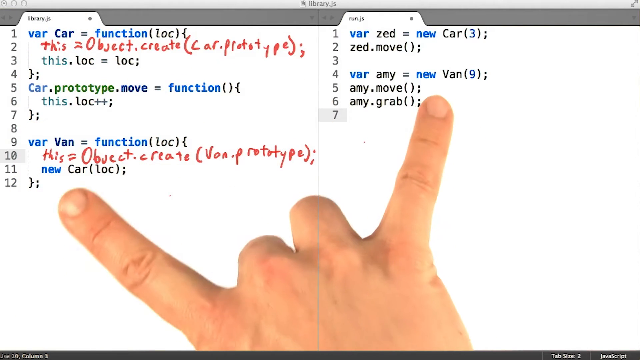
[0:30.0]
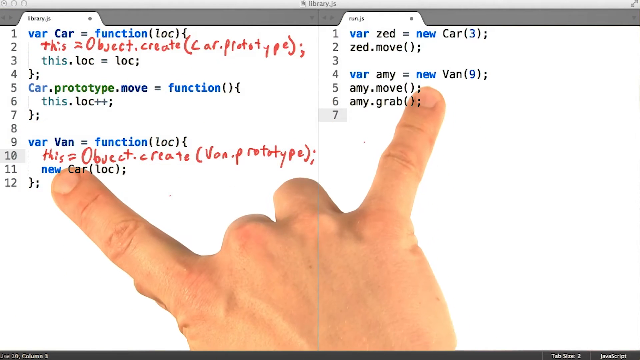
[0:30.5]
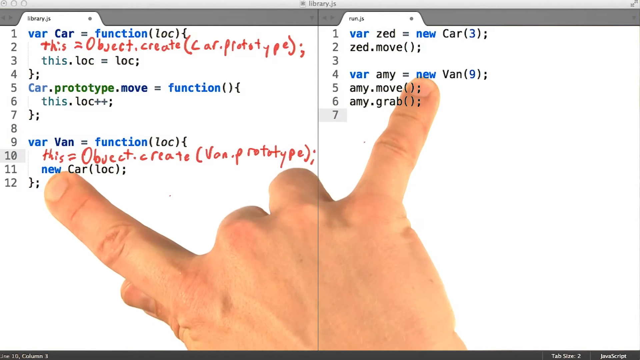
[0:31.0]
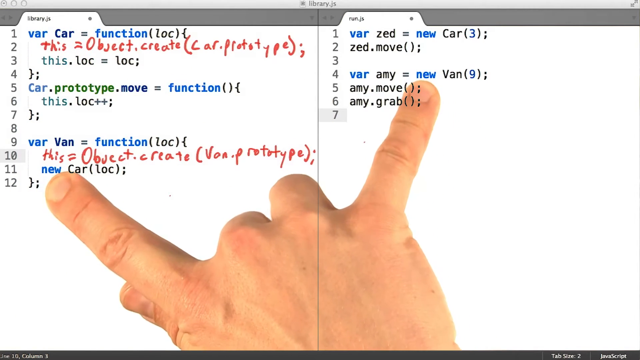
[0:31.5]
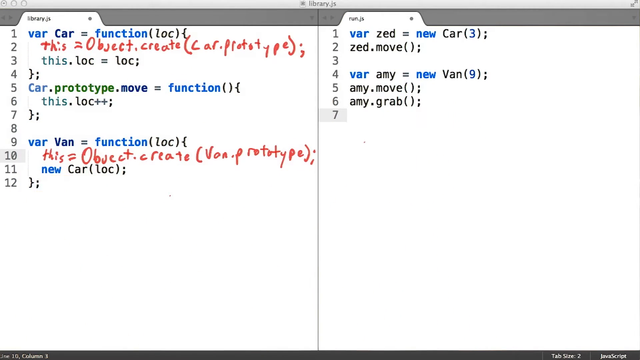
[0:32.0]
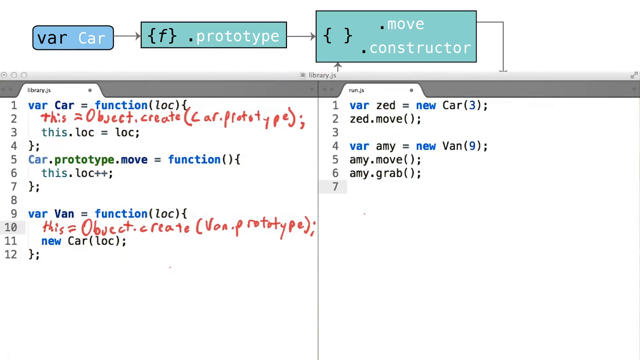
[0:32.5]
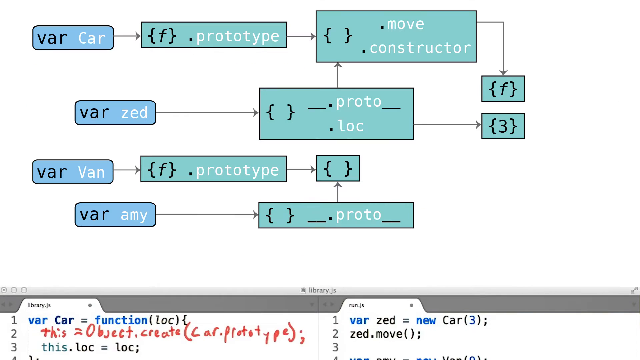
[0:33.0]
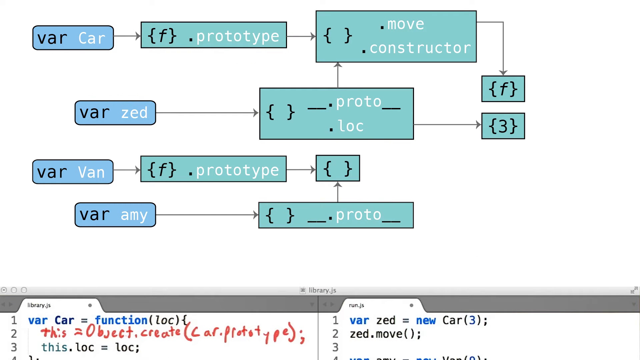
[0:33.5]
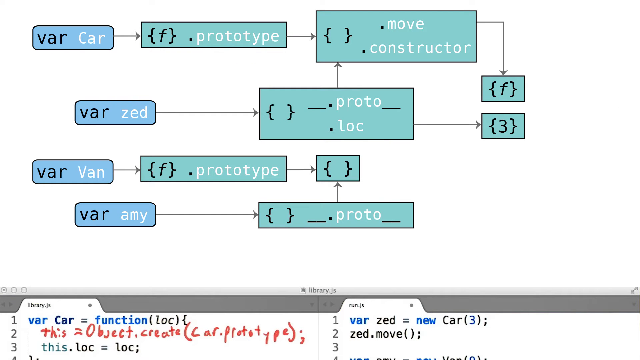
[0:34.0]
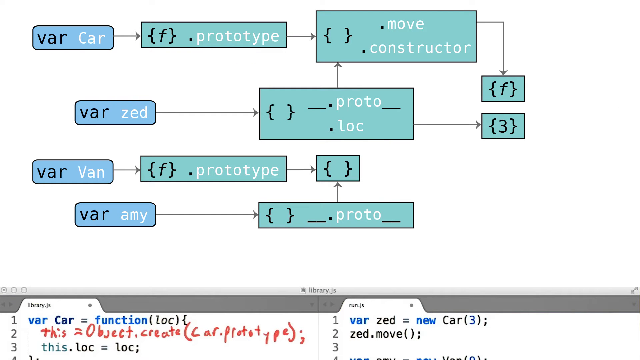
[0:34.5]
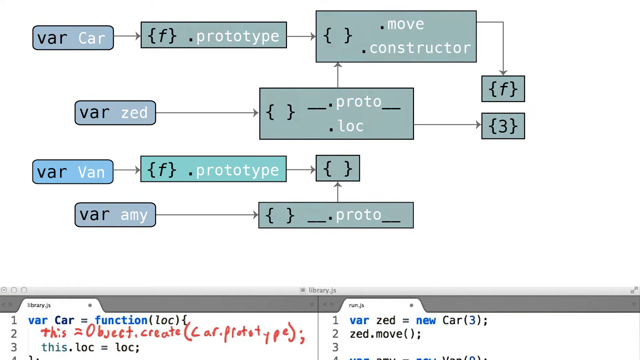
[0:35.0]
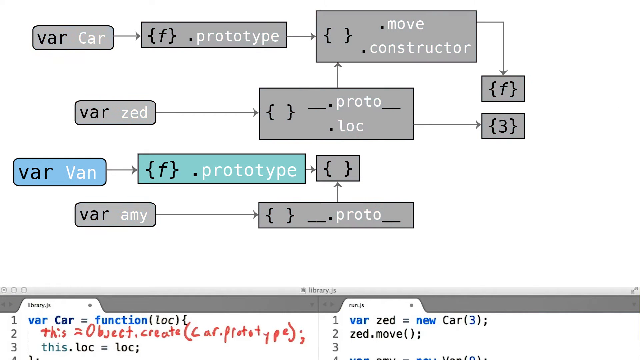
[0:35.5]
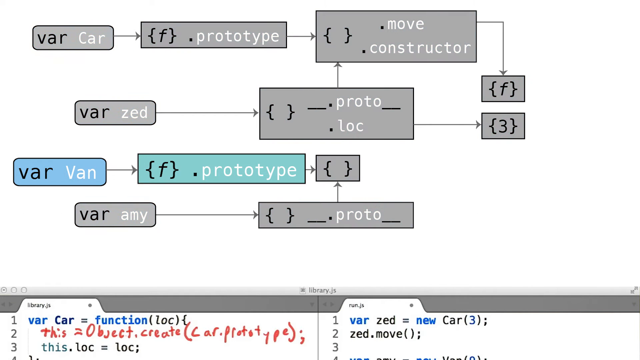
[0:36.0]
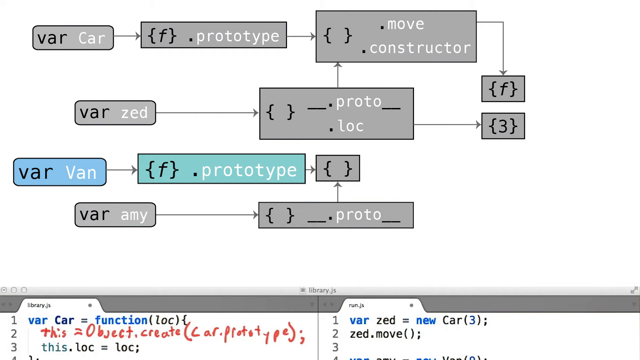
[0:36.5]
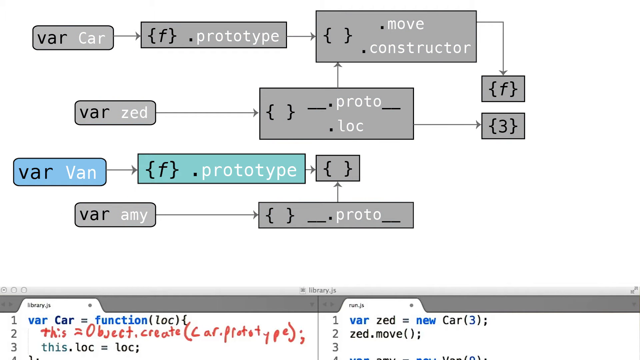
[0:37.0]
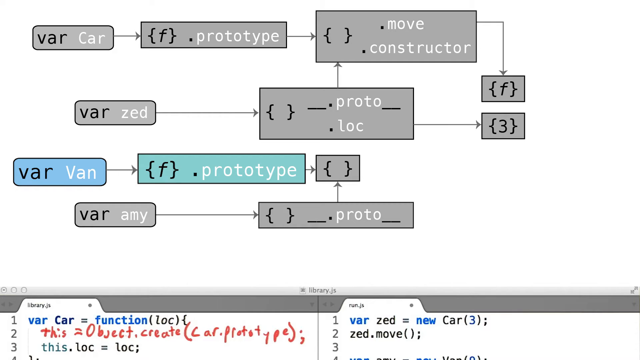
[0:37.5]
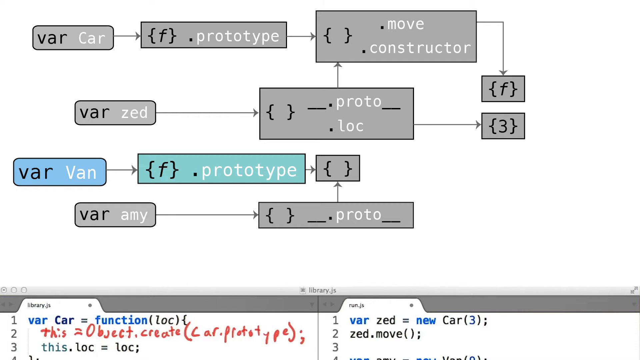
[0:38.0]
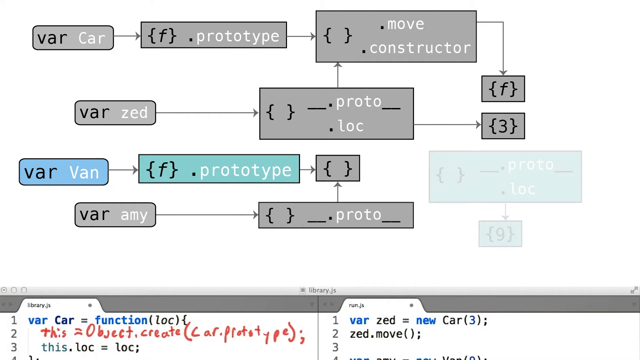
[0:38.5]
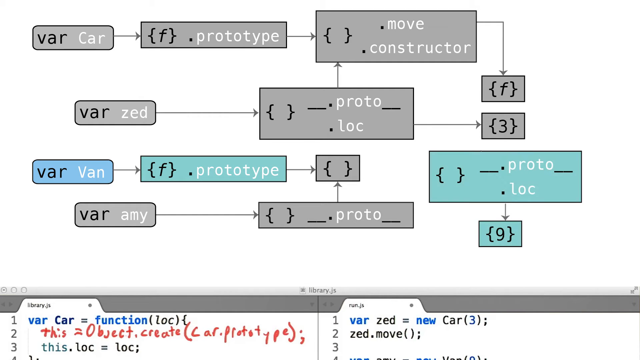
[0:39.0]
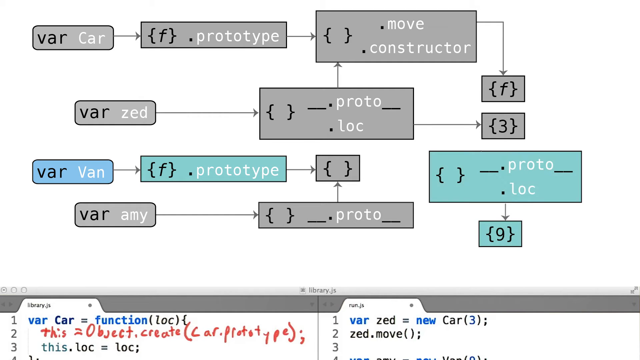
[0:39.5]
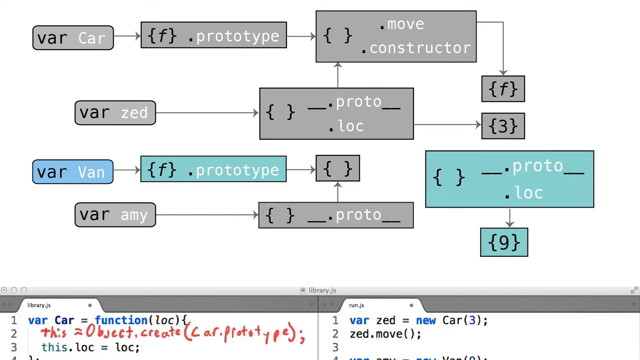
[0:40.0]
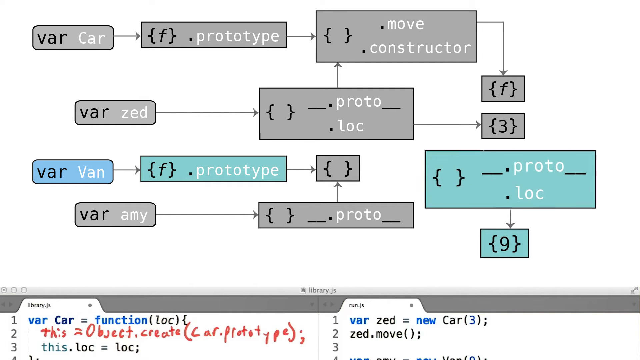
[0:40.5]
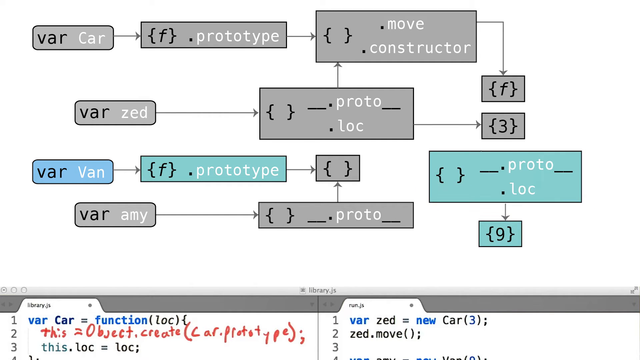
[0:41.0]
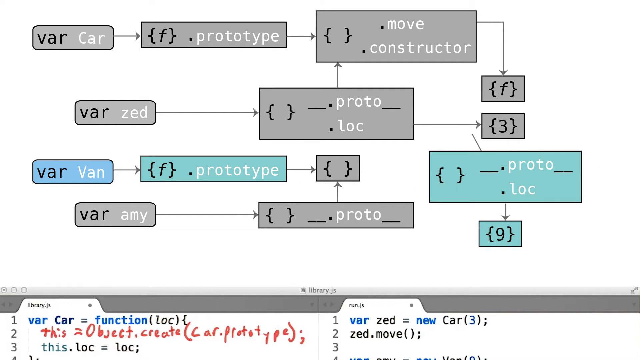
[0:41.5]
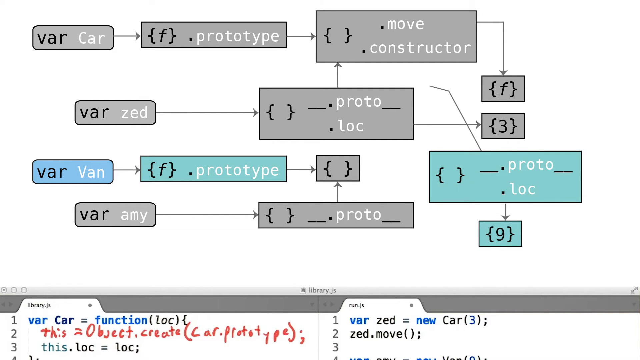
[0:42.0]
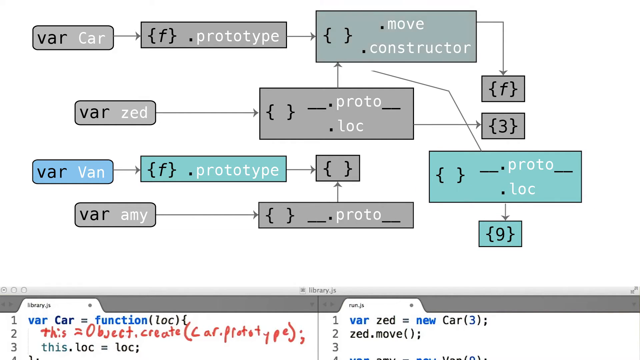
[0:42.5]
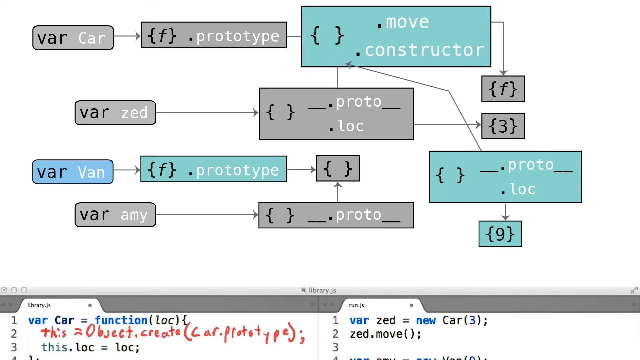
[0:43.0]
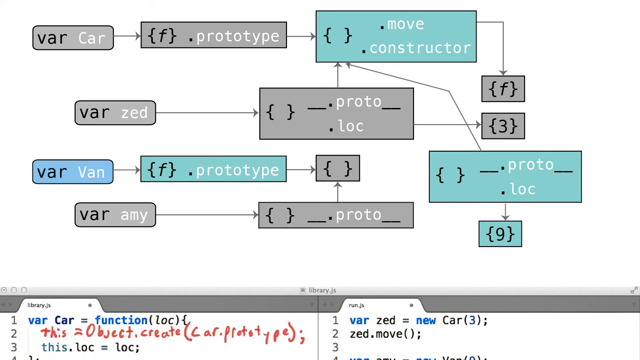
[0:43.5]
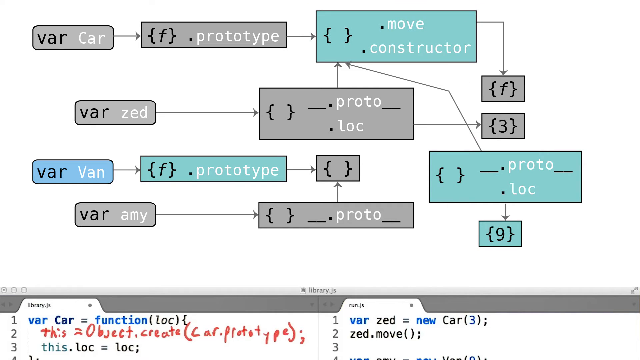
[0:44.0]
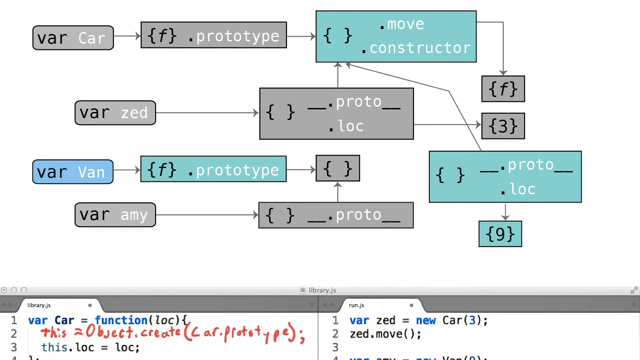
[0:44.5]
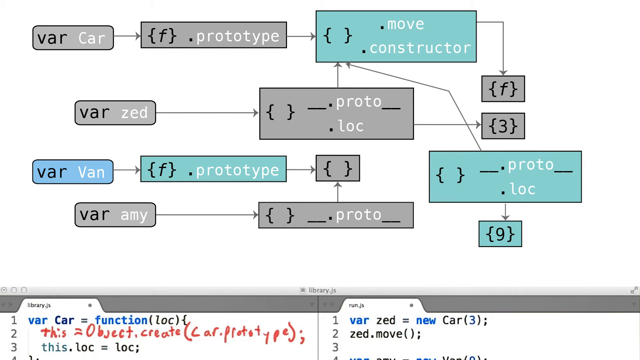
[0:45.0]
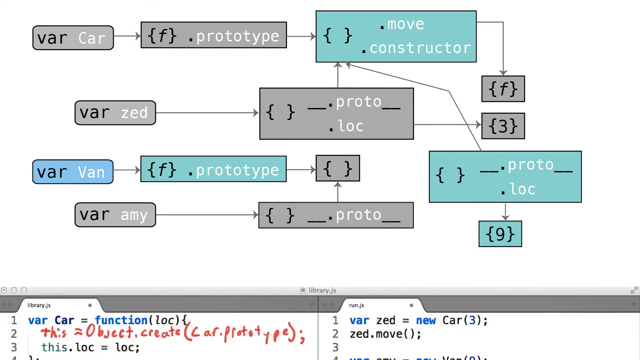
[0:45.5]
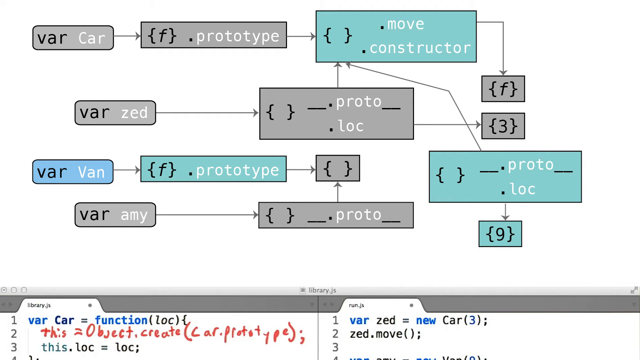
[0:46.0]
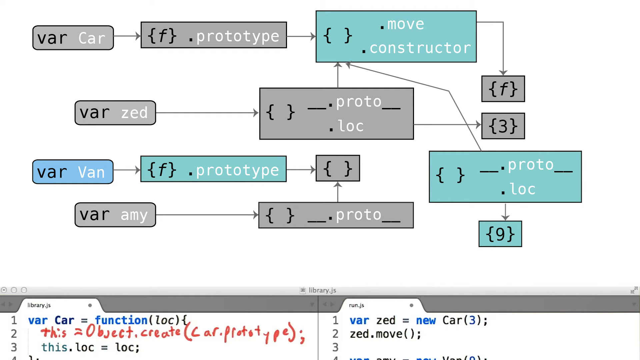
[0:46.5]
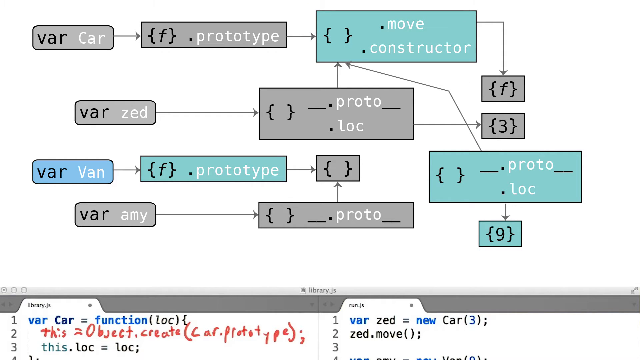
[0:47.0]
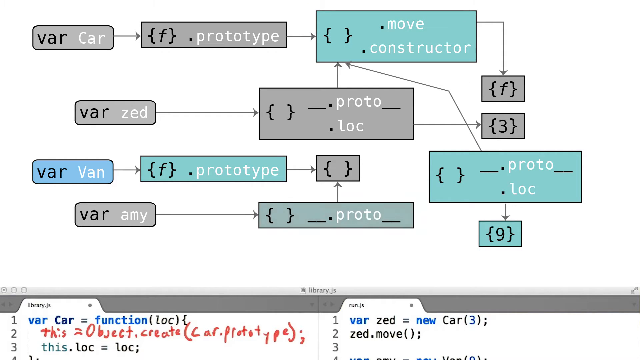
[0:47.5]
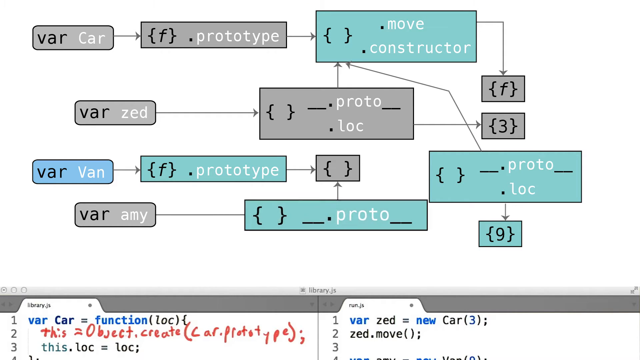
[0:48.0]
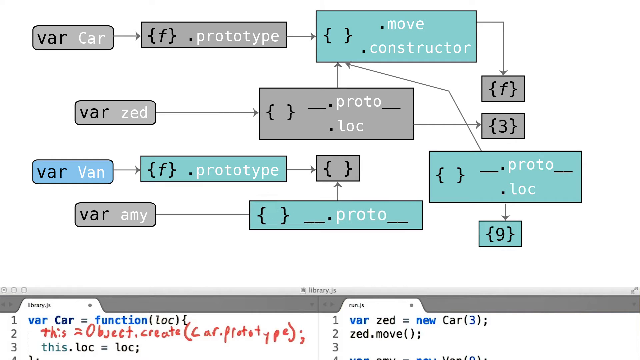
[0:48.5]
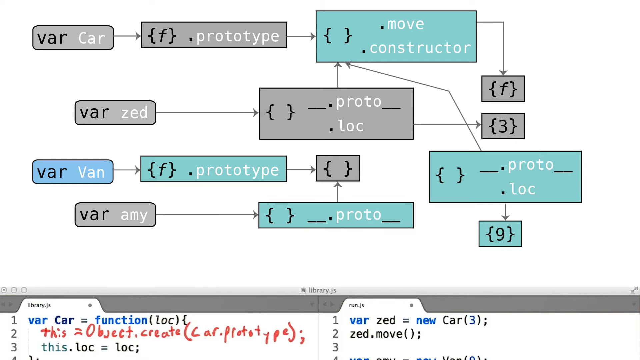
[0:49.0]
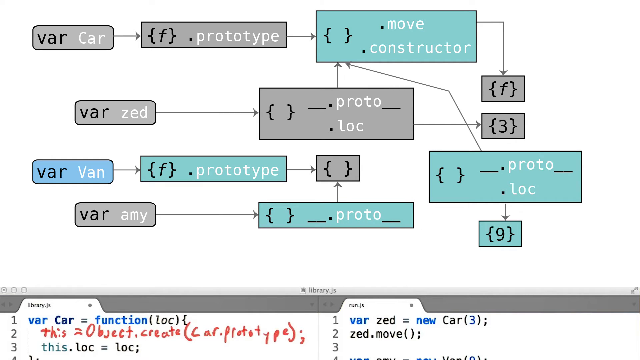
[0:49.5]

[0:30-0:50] The two sides of the screen with lines of code remain, now with lines 1 through 12 on the left-hand side and still lines 1 through 7 on the right-hand side. What looks like the person's right hand points with the index finger to the bottom lines of code on the left-hand side while the pinky finger is stretched out and points to the bottom lines of code on the right-hand side. Next, a sort of flowchart appears, made up of rectangular boxes in a slate color, with a couple of boxes in light turquoise, and text in black and white lettering. It begins with "VAR car", which moves to "function.prototype", and the next box says "move constructor"; the flowchart continues from another function and then ends. A second part of the flowchart says "VAR ZED", which goes to "proto" and then "LOC"; that box can either go back up to the original line of the flowchart or go on to the number three. Additional lines of code appear, apparently if-then statements. A particular line that says "VAR van" and goes to the function prototype is highlighted by zooming in on or enlarging the text. Another box appears showing, within a second set of parentheses, "prototype" or "LOC", which flows to the number nine. Different lines are highlighted with differently colored boxes, and the boxes zoom in or enlarge.